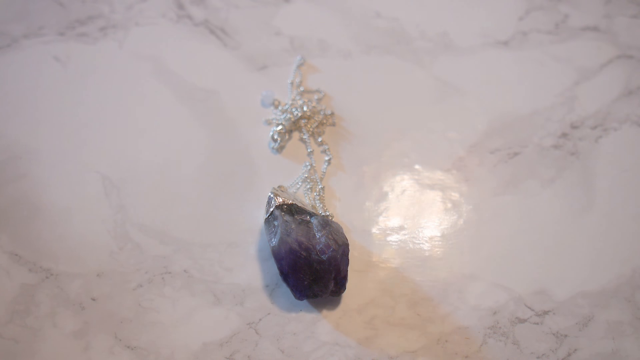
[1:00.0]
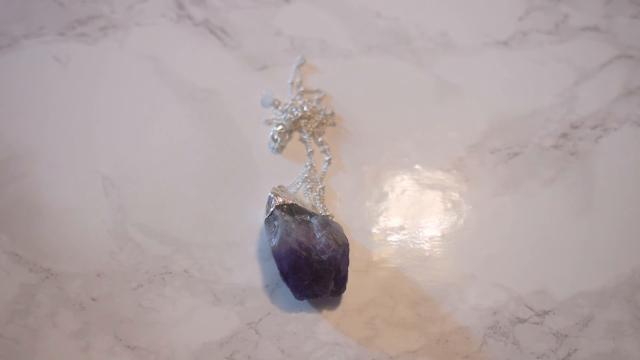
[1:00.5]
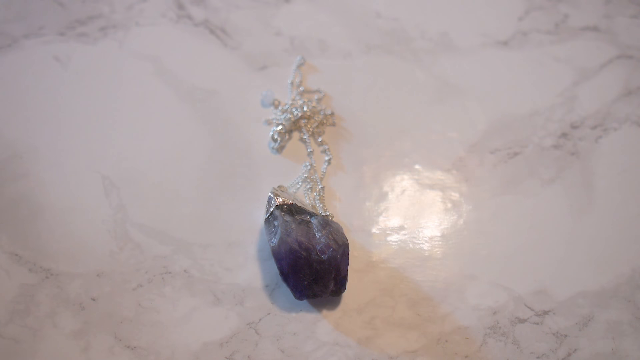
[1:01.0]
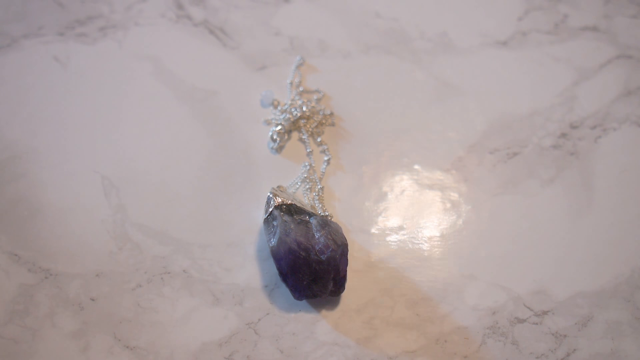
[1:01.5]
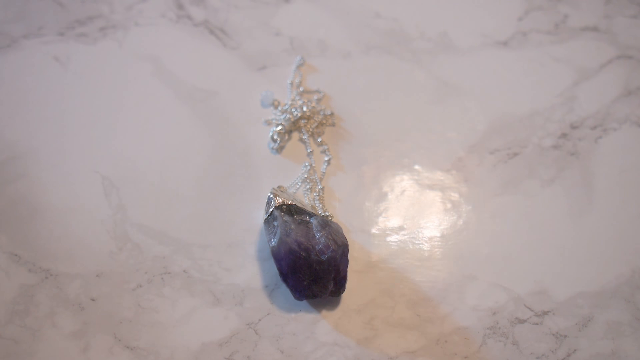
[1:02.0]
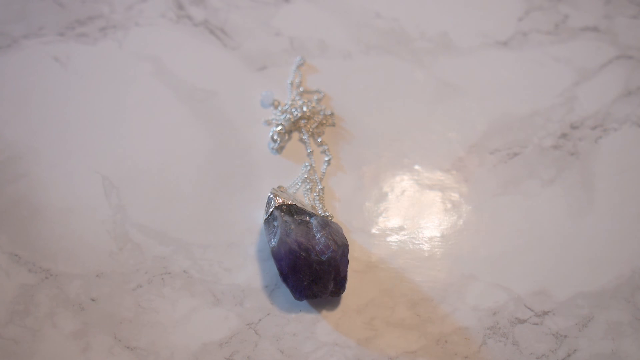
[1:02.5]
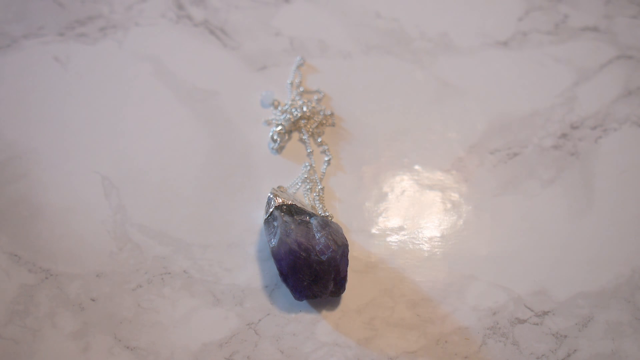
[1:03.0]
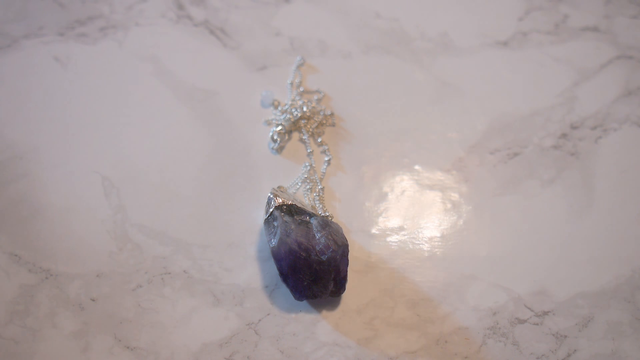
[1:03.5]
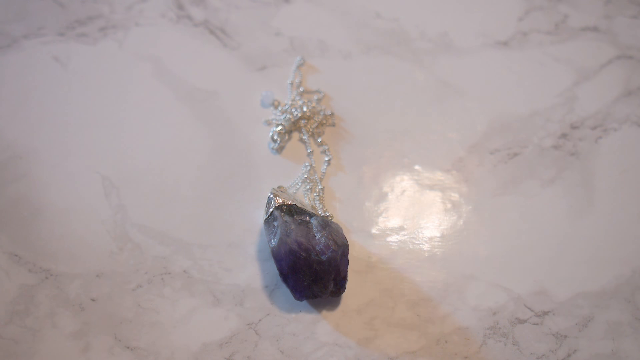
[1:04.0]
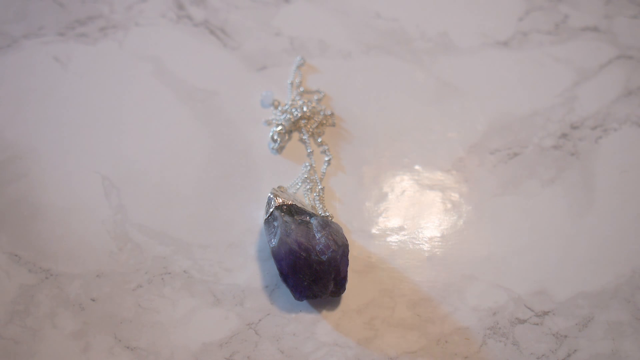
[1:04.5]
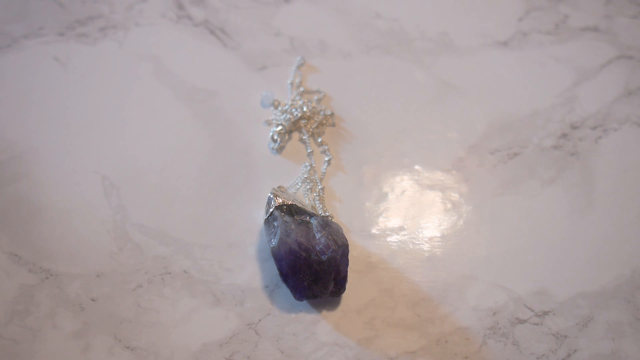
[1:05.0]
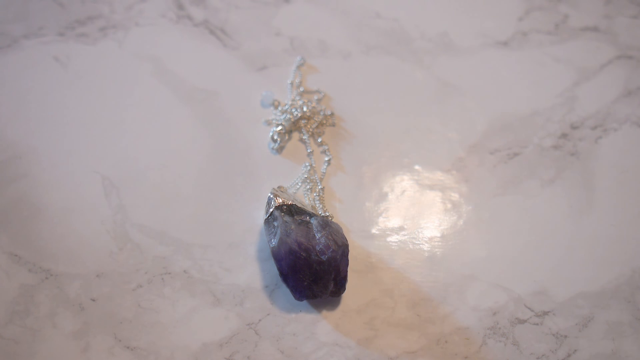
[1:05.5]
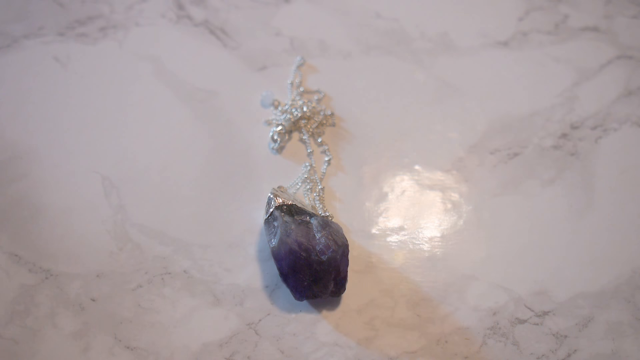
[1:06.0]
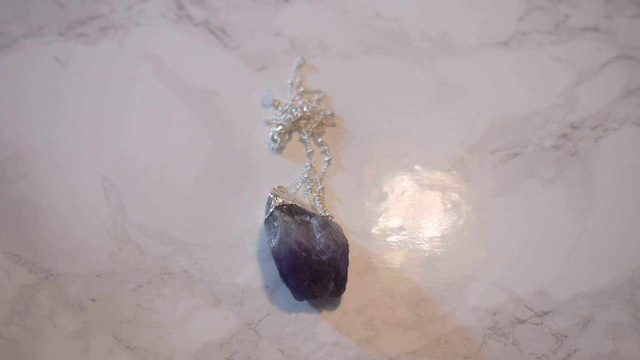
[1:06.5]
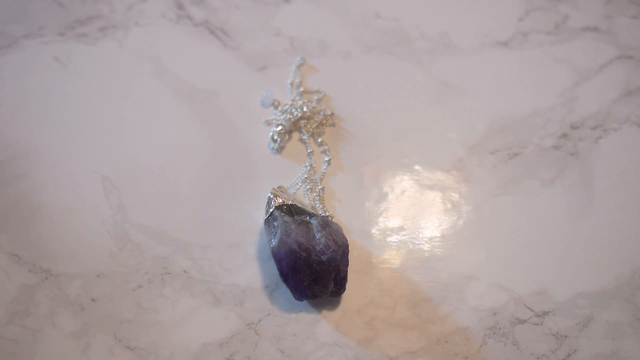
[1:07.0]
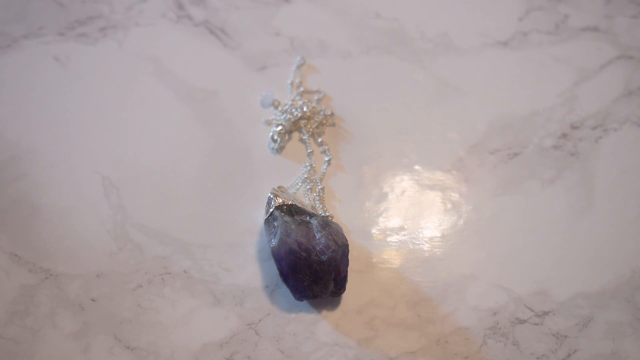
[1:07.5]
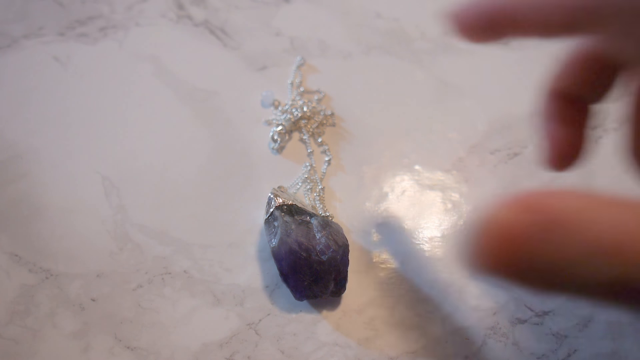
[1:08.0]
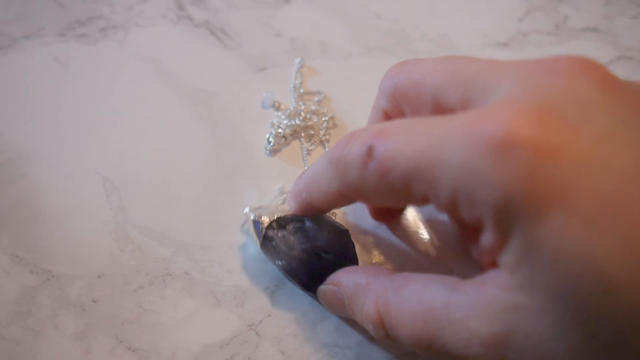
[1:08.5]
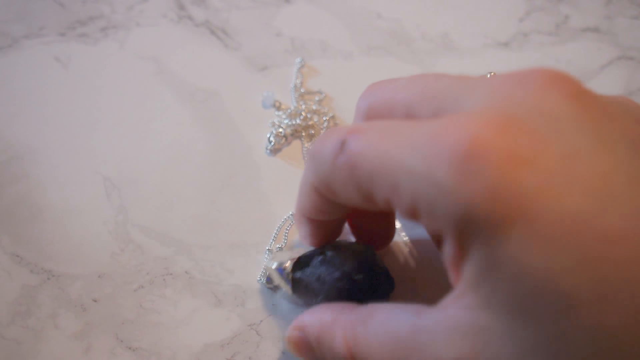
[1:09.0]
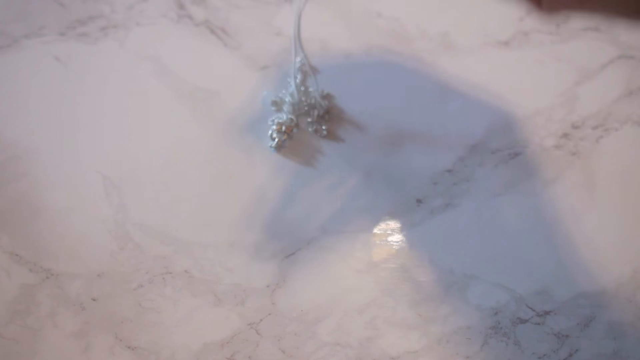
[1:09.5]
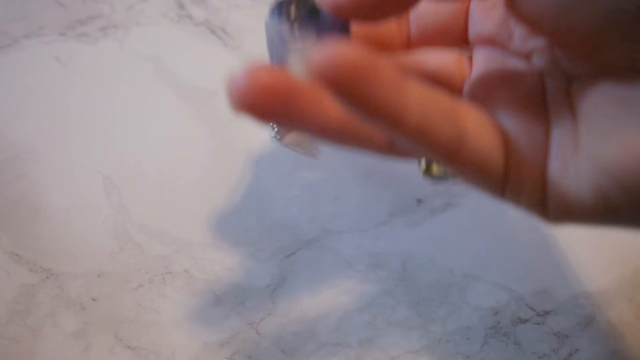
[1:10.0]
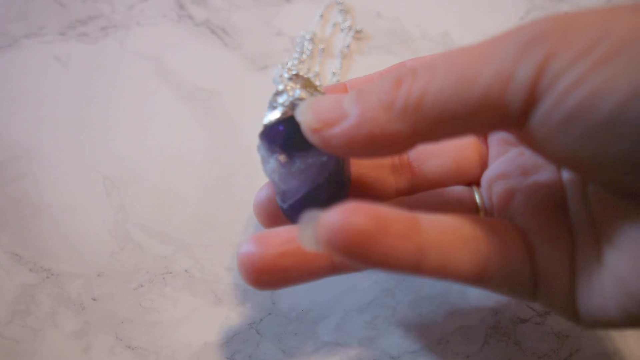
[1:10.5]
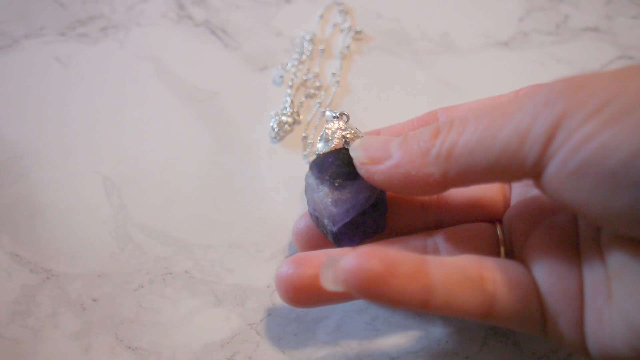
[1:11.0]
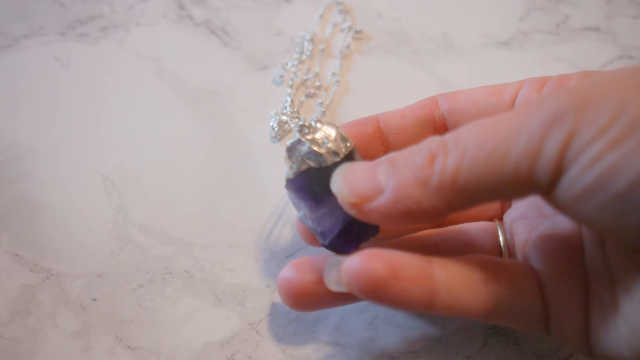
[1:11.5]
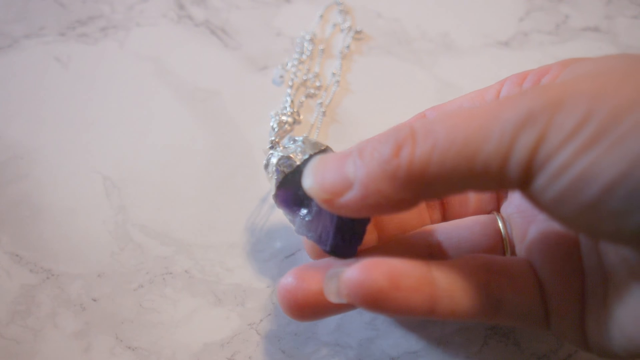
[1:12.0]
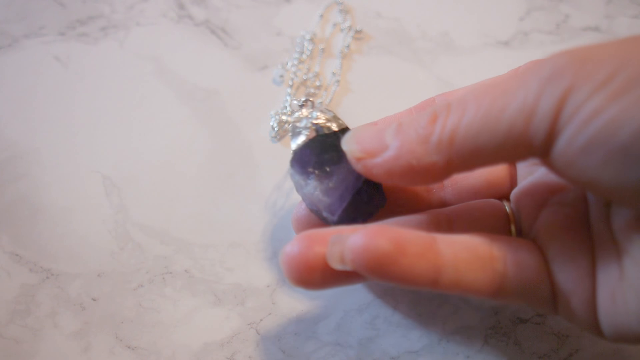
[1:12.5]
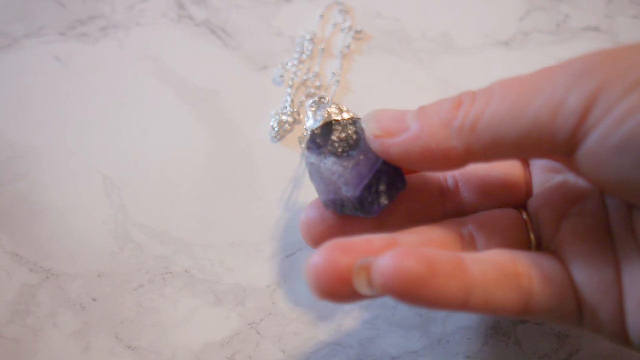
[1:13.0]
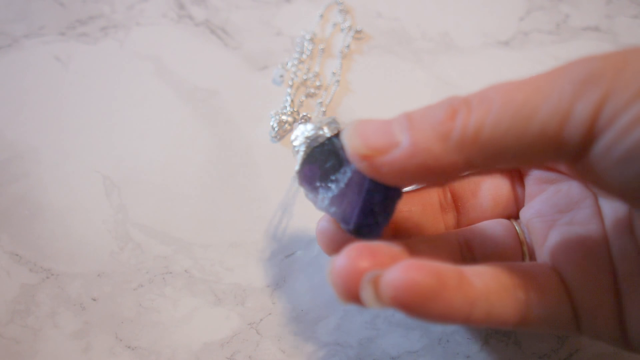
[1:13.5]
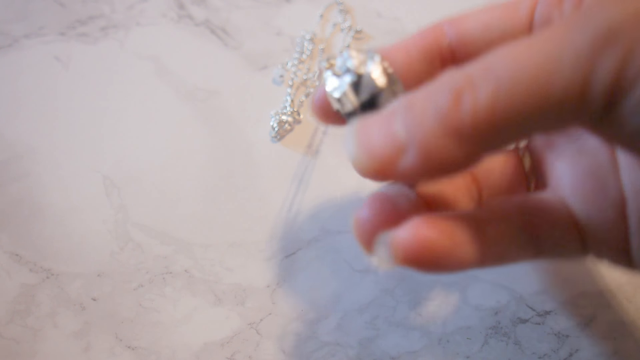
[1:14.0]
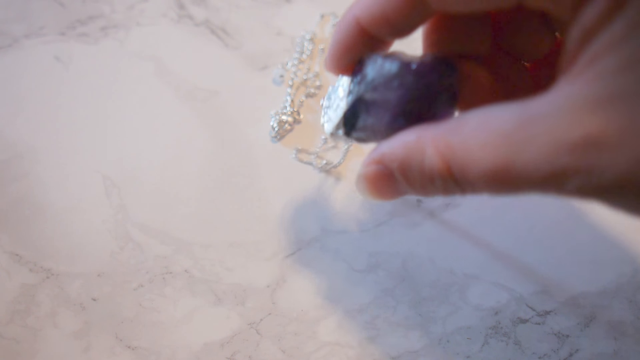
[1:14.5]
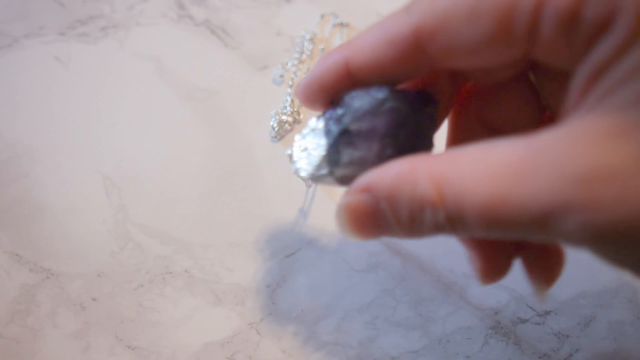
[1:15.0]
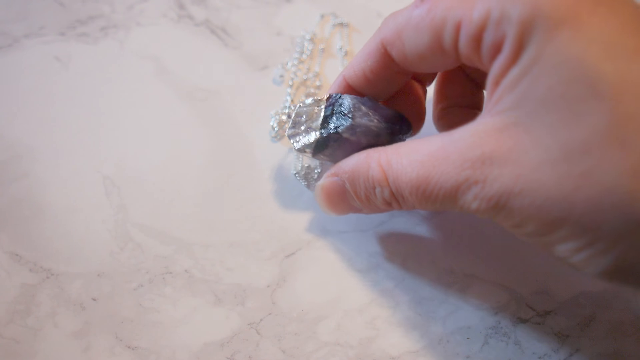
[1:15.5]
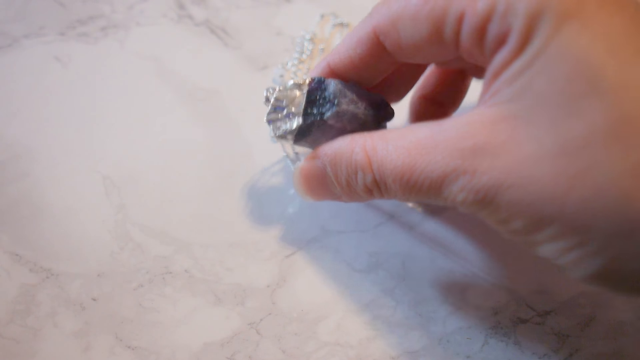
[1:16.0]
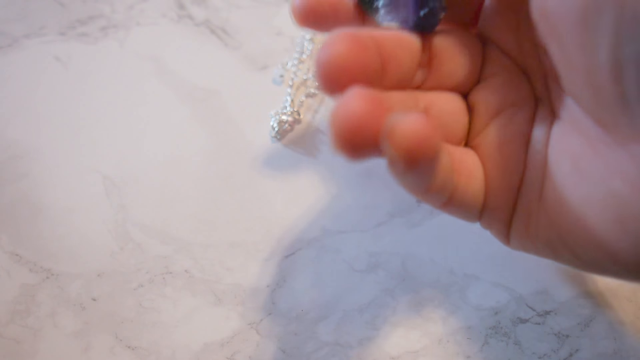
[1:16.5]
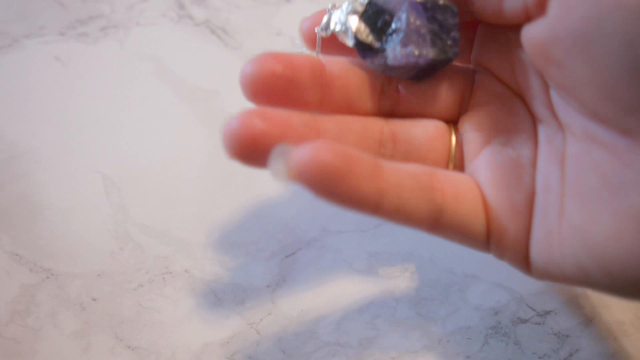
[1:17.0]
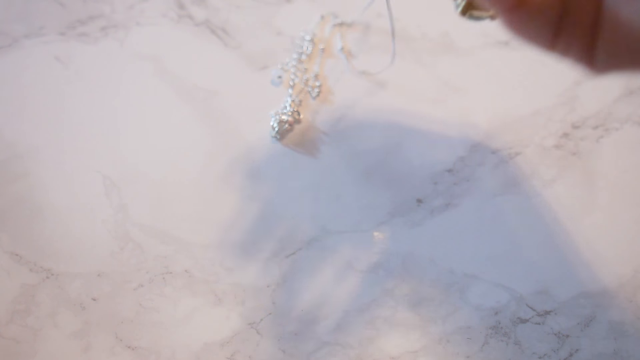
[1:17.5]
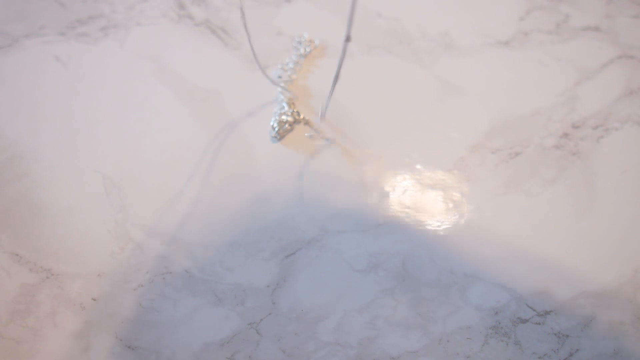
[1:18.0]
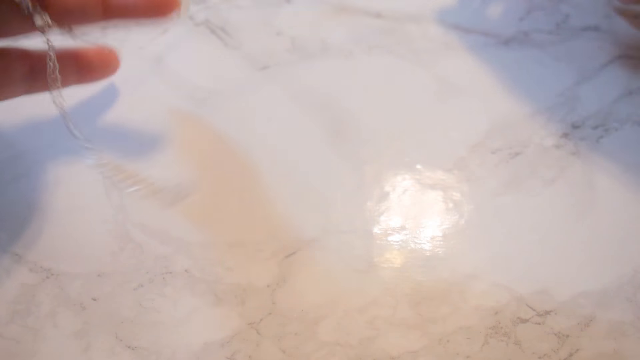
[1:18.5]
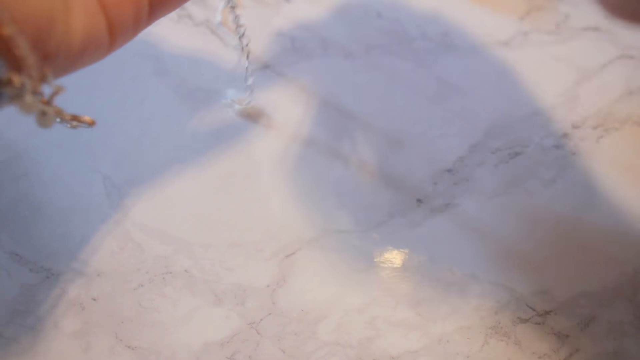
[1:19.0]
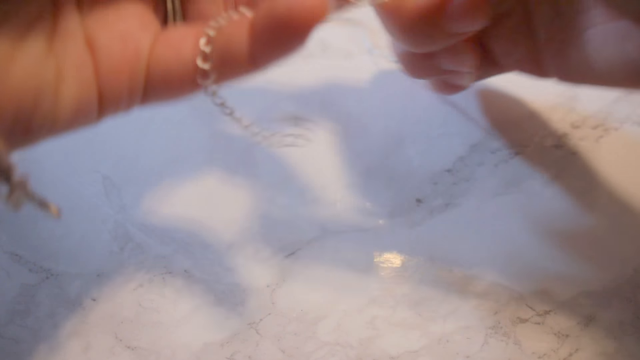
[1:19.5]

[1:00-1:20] The camera focuses on the necklace's reflection on the surface, towards the light, with the reflection of the ornament shining and changing. A hand then picks the necklace up, brings it close to the camera, and twists and rotates it on the screen to show its finer details. The necklace looks precious.